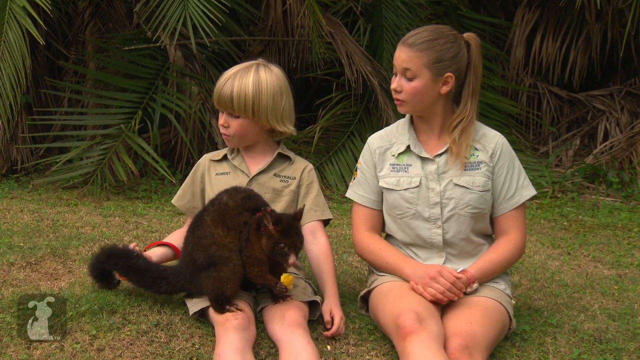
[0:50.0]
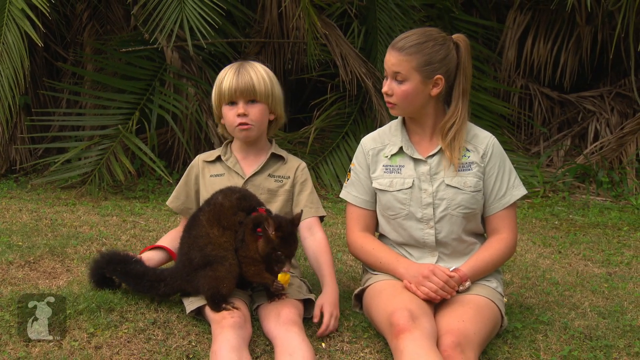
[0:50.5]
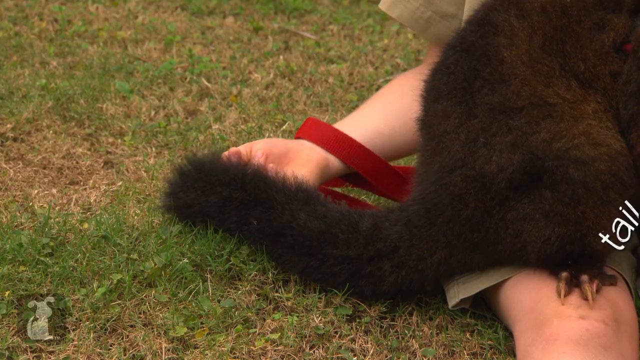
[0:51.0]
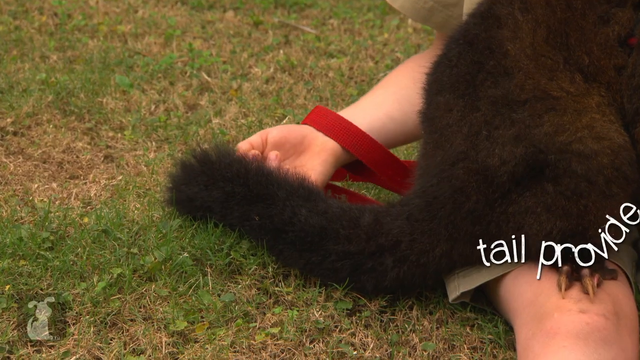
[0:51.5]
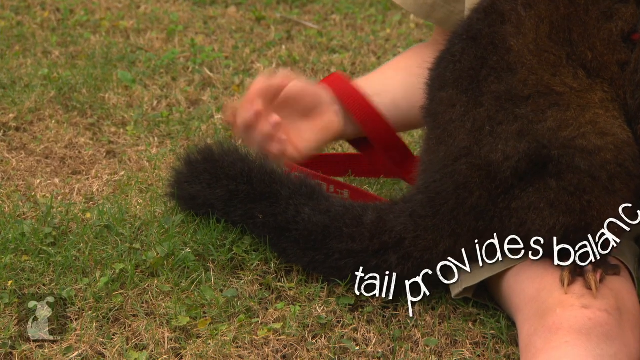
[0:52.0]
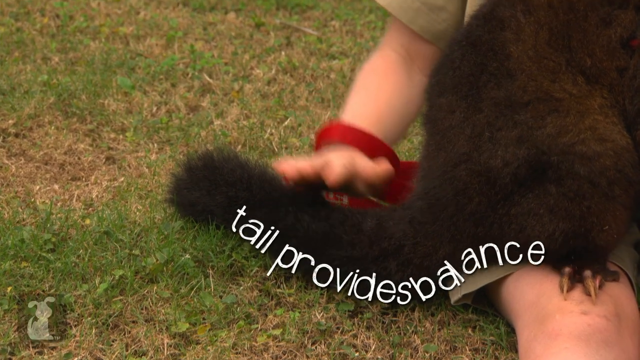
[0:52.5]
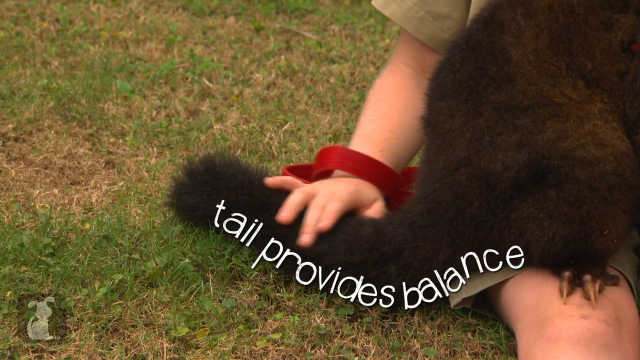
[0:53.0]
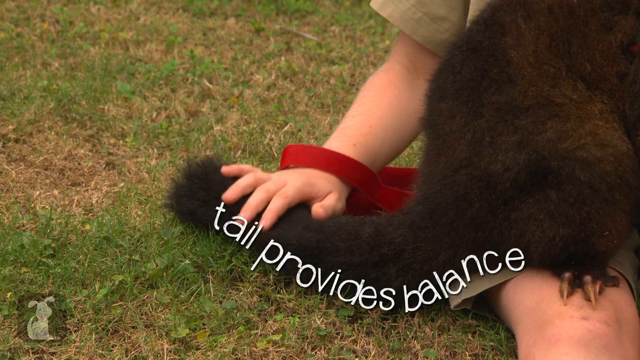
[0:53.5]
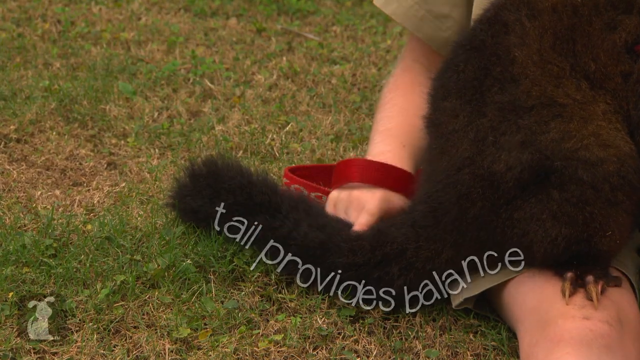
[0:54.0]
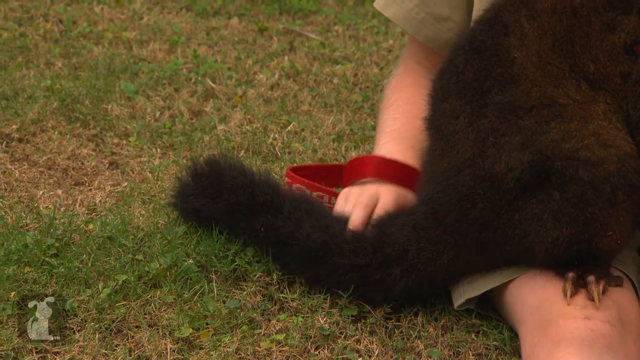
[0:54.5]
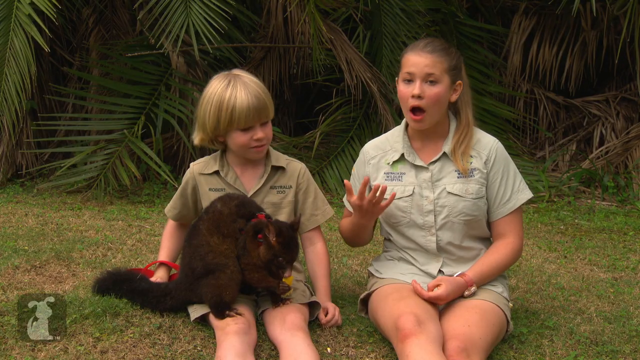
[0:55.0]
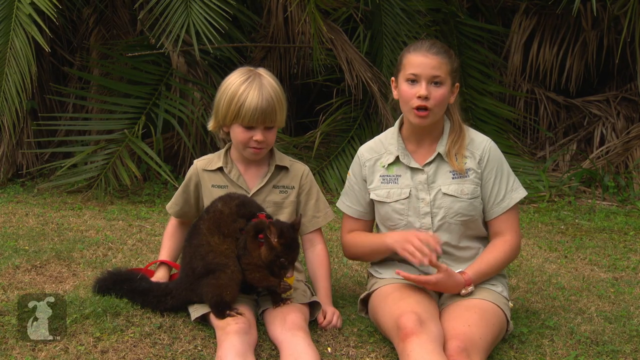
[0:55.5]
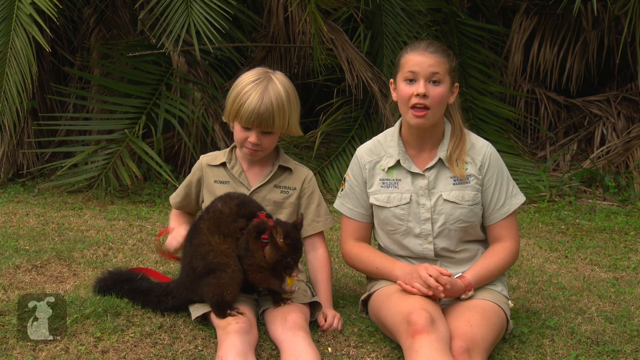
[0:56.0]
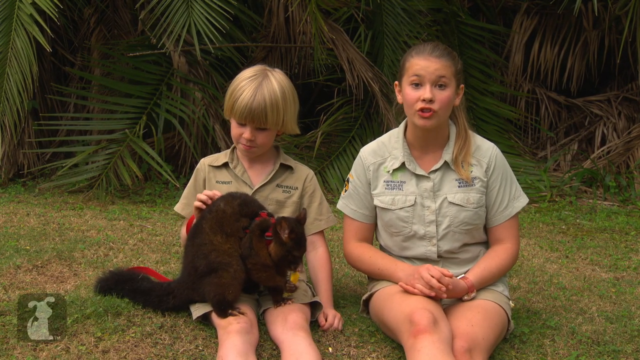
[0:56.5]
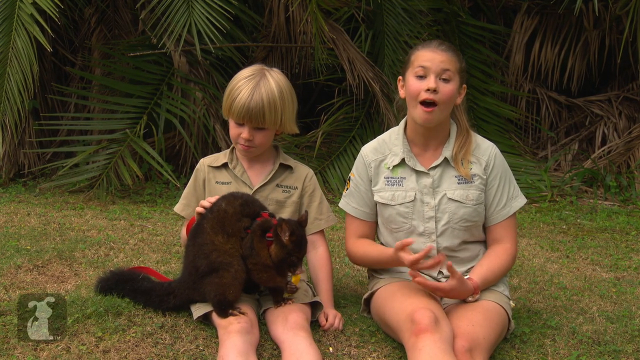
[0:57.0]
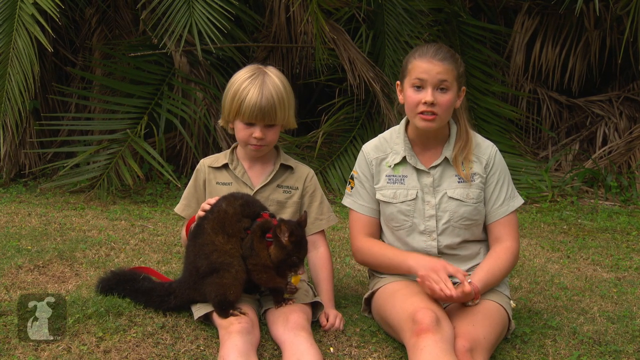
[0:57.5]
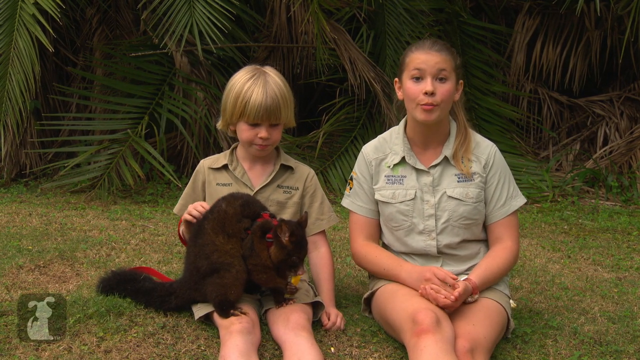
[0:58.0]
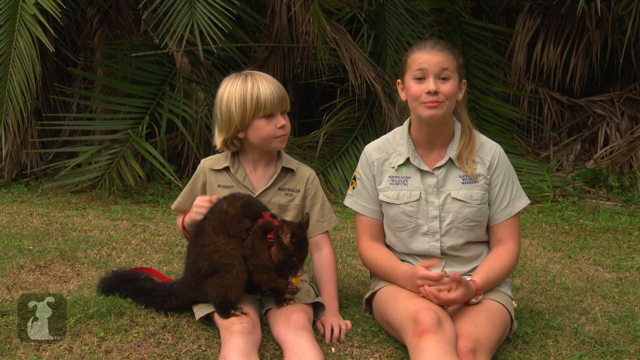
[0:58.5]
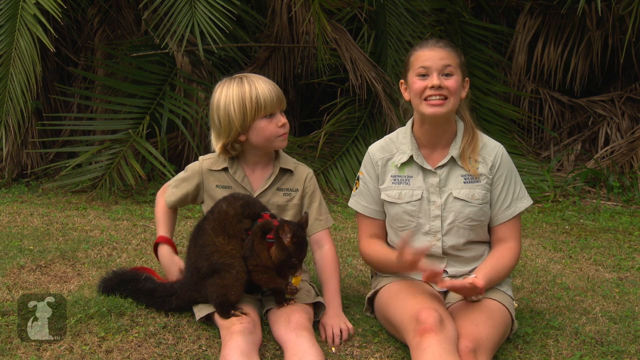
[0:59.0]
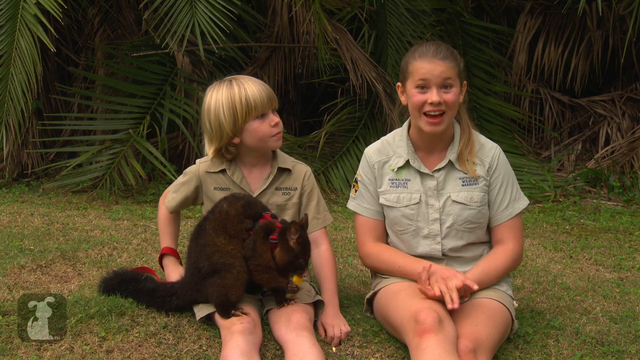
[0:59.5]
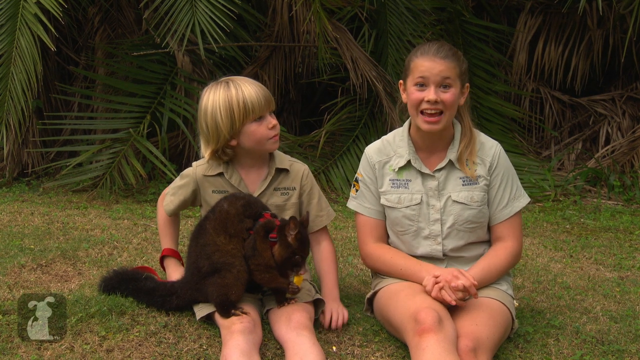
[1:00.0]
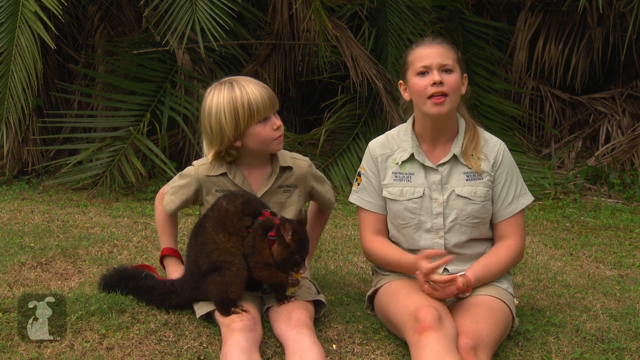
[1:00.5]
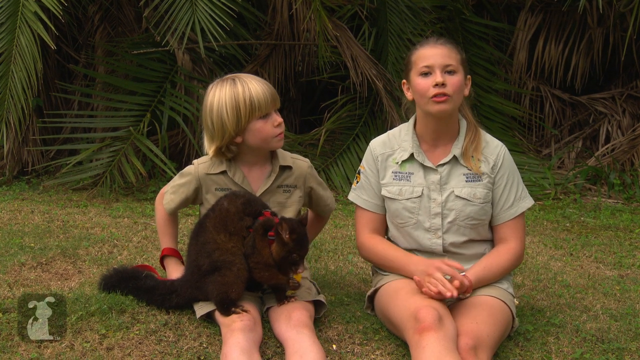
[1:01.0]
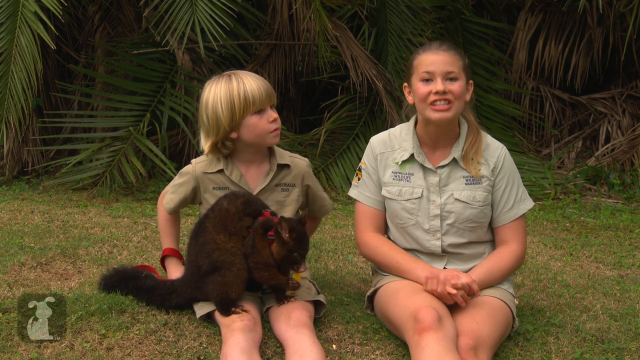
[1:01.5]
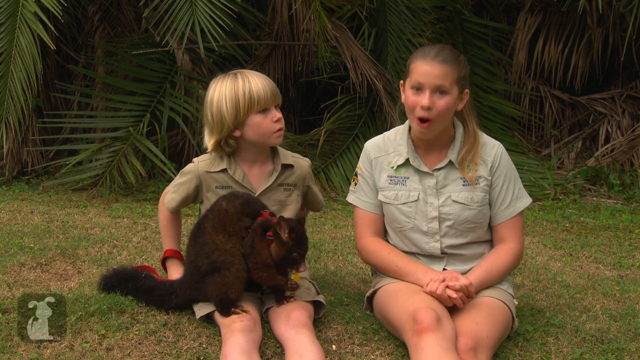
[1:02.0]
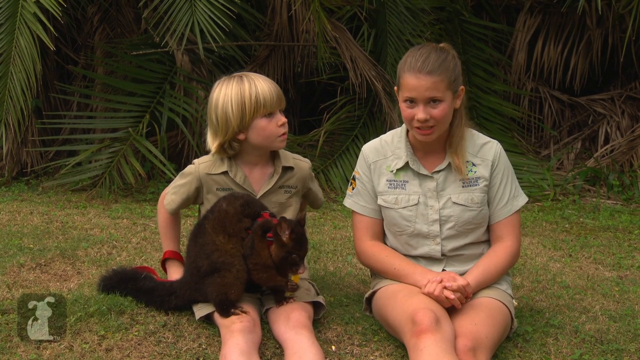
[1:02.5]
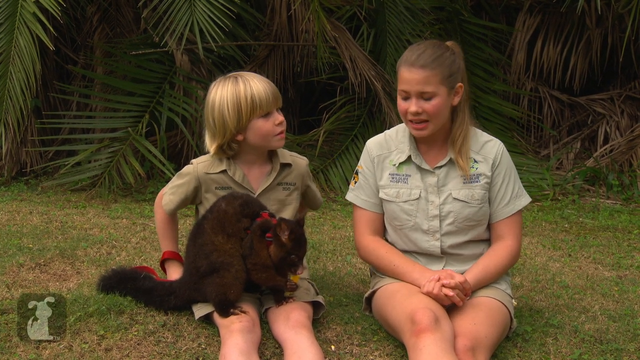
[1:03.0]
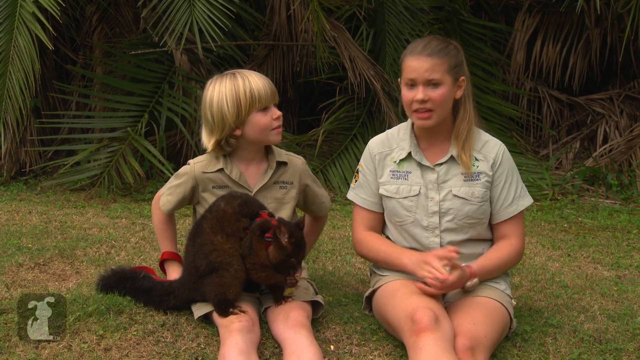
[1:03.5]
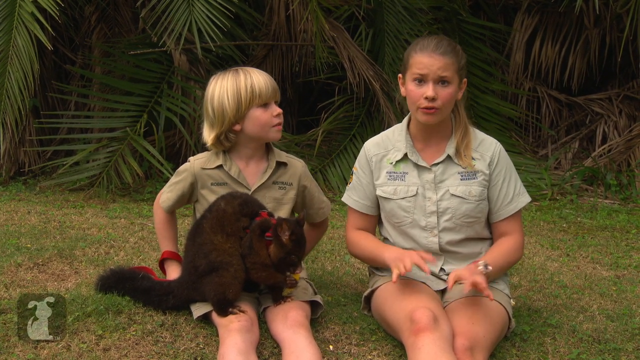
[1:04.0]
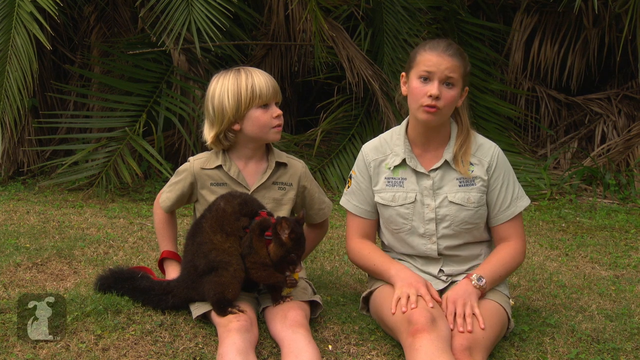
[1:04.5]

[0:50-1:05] The young boy and young girl sit on grass in a tropical setting in front of bushes and trees, petting and looking at the possum as it eats a piece of fruit. The possum has a red leash attached. Partway through, the view zooms in on the possum's tail, and text slides in over the tail reading "the tail provides balance." On the bottom left is an icon of a silhouette of a dog, and on the right an icon with a pink backdrop and a cat, with white text above the cat reading "subscribe."